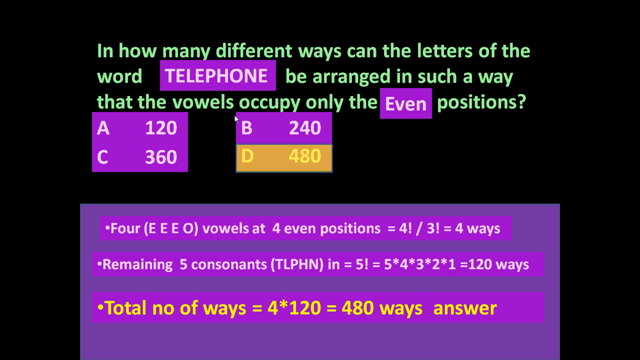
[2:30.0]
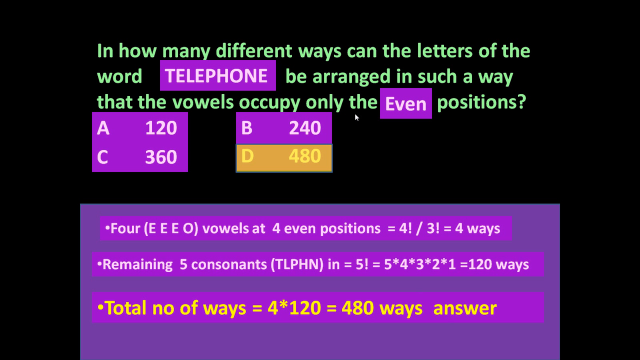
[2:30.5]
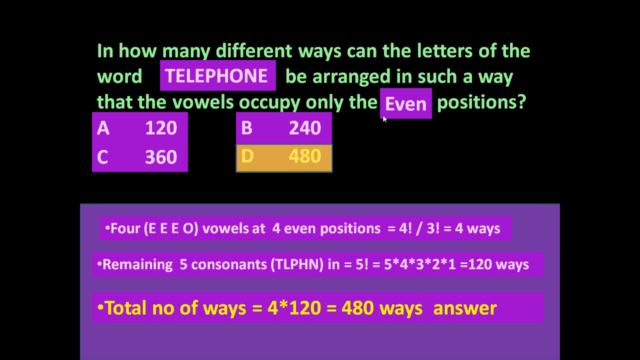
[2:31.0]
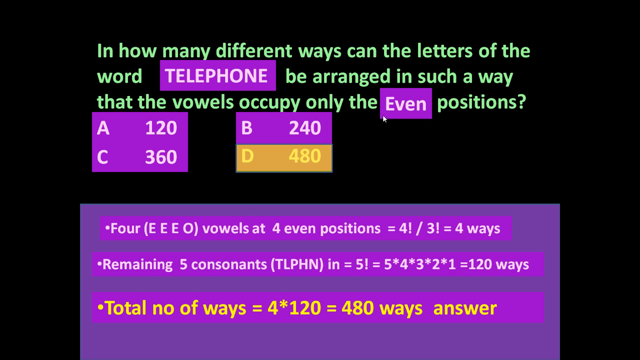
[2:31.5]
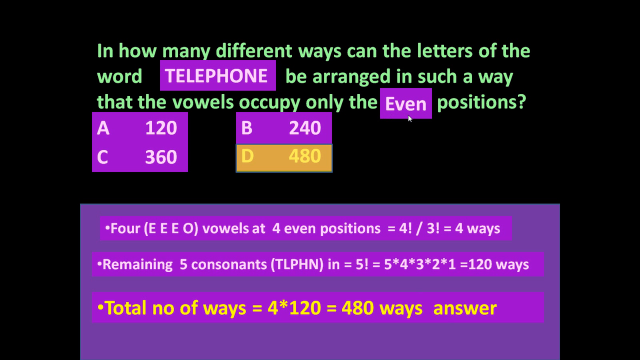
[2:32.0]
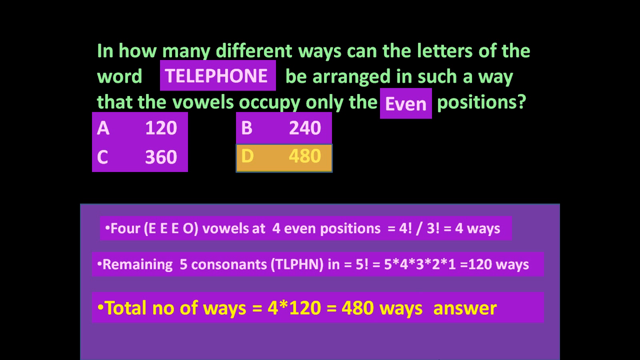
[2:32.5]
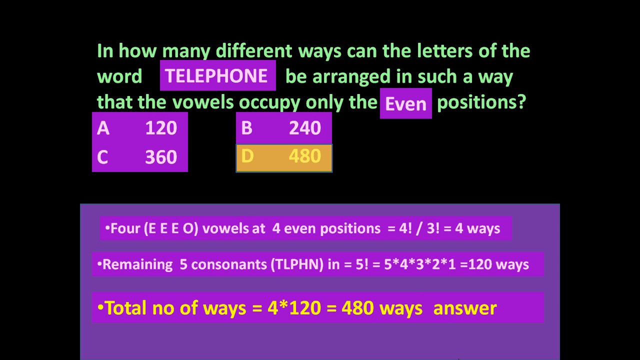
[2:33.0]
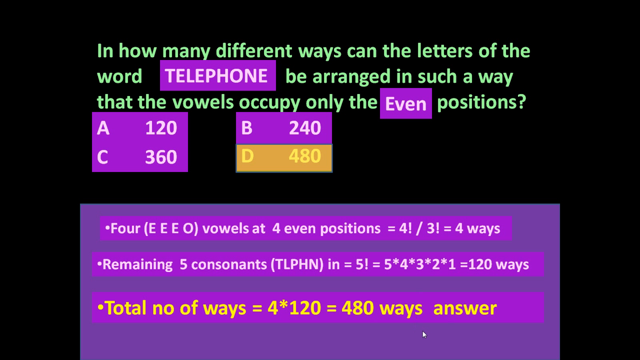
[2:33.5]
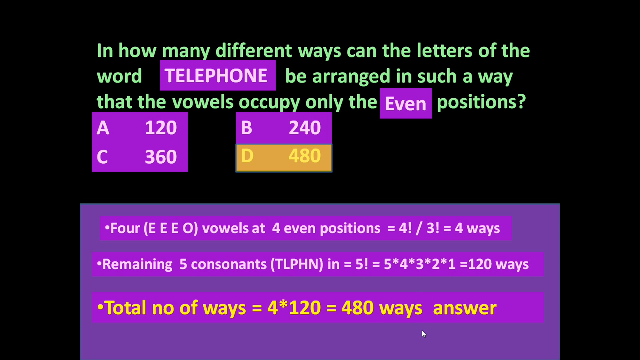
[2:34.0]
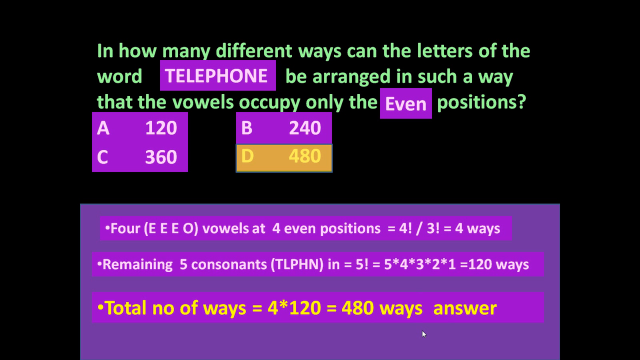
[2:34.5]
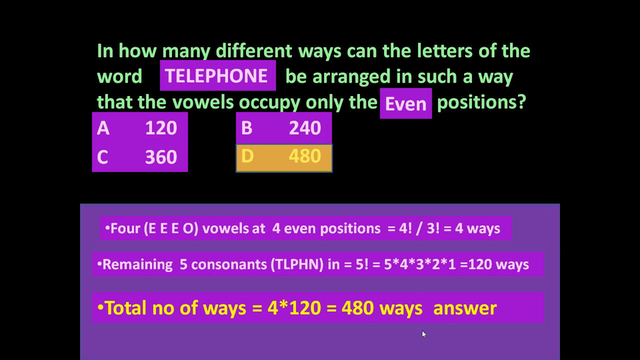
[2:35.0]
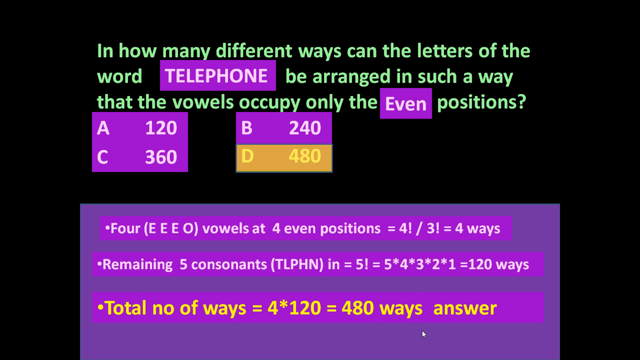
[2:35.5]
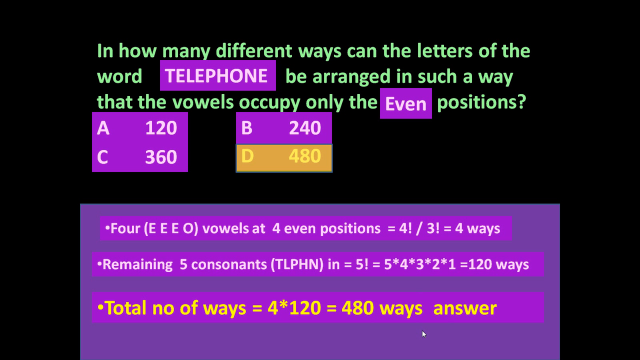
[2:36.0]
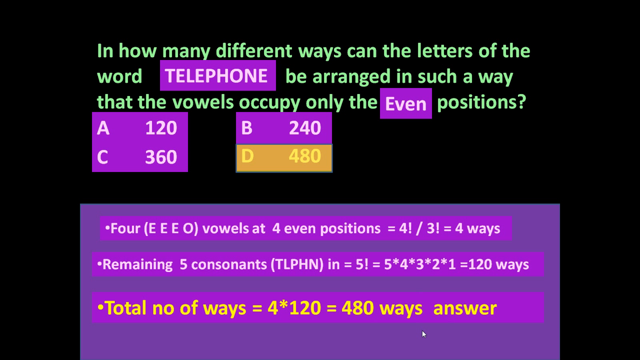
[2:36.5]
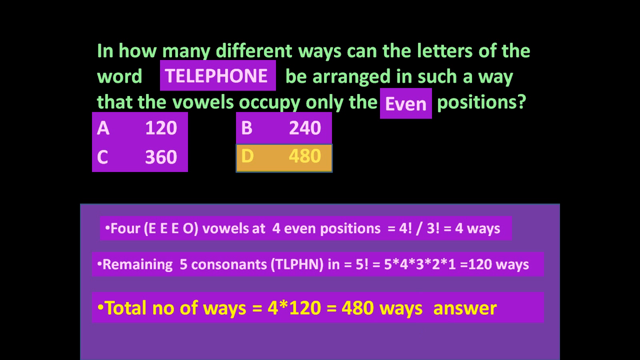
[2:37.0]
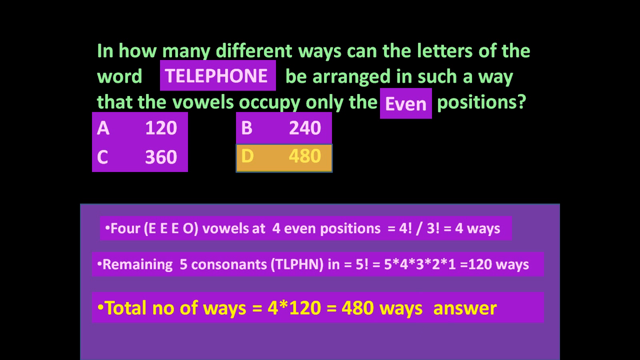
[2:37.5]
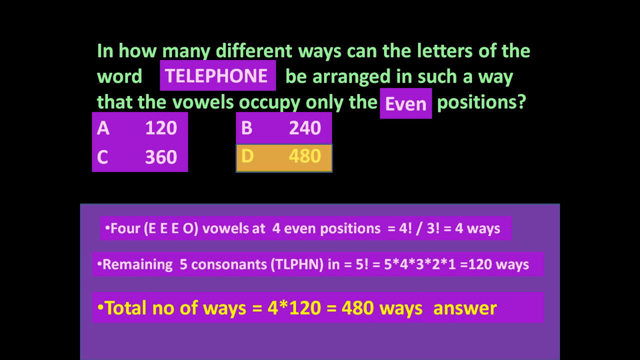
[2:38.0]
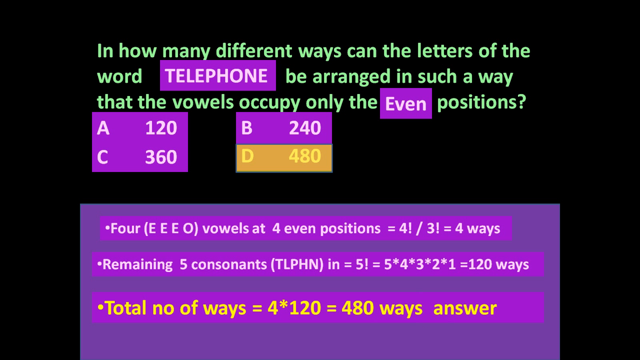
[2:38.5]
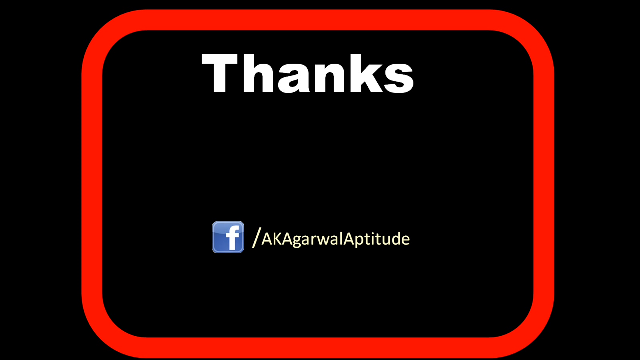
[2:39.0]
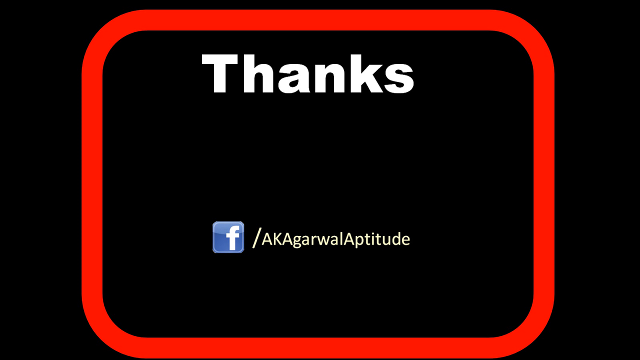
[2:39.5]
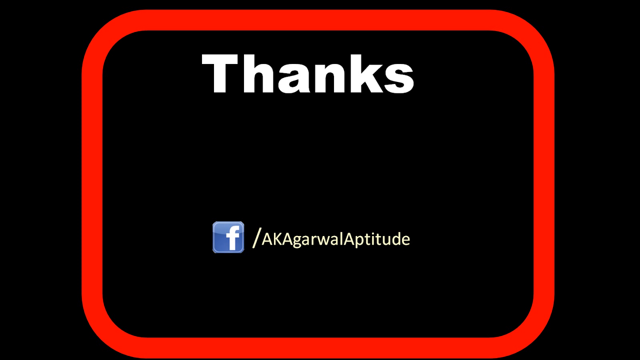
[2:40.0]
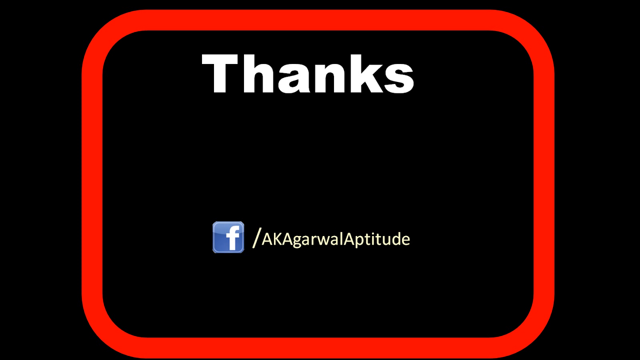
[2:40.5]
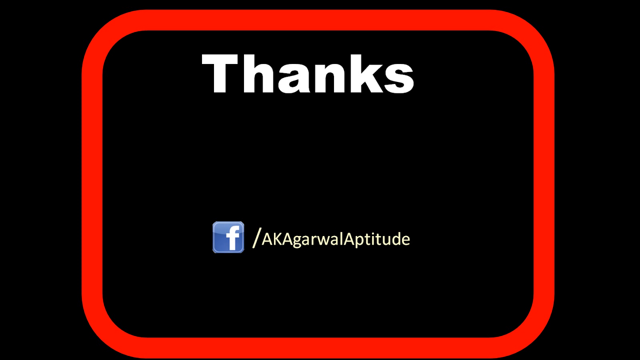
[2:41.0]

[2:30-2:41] A black background shows a text box at the top where green text reads "how many different ways can the letters of the word telephone be arranged in such a way that the vowels occupy only the even positions?" Telephone and even are in purple text boxes. The answers are in two rectangles: on the left, "A120" with "C360" below it; on the right, "B240" with "D480" below it, highlighted in gold. The purple rectangle below holds three bullet points: "four EEEO vowels at four even positions, equals four!/three!, equals four ways," then "remaining five consonants, TLPHN, N equals five, equals five times four, times three, times two, times one, equals 120 ways," and, in gold, "total number of ways, four times 120 equals 480 ways. Answer." Then a red screen appears that says "thanks," with a Facebook logo, a slash, and "AKAgarwalAptitude."